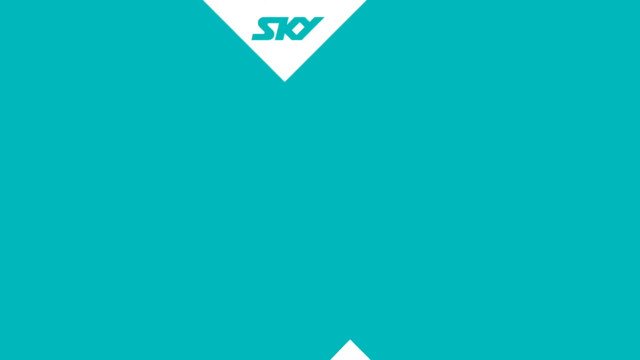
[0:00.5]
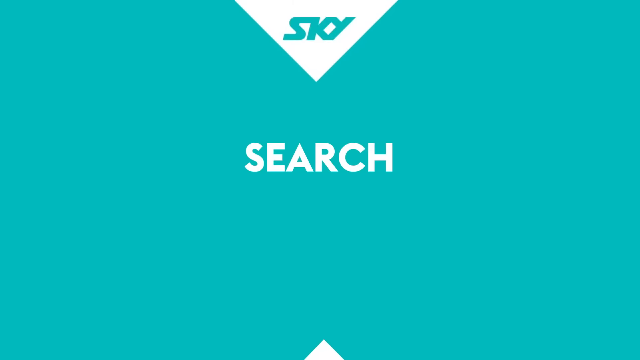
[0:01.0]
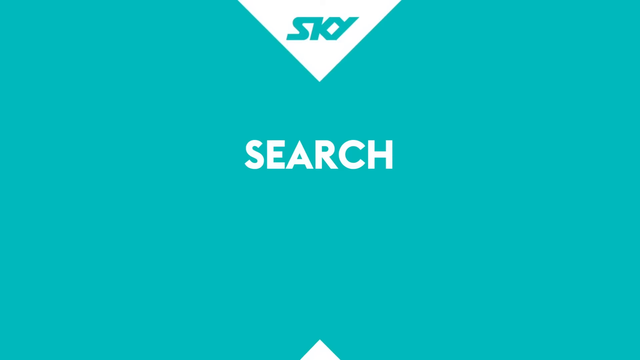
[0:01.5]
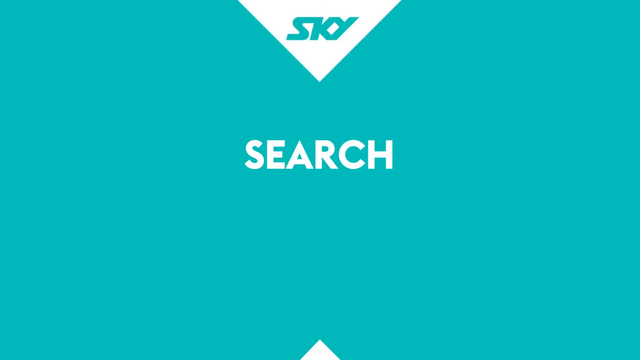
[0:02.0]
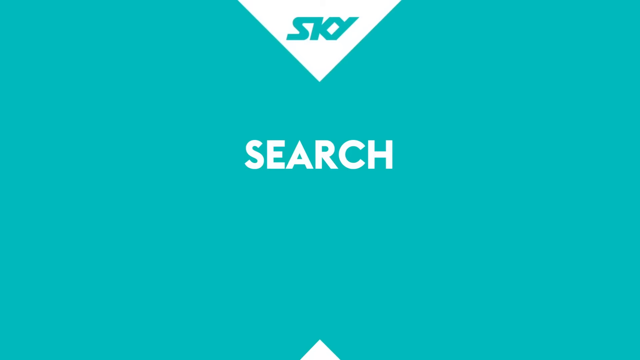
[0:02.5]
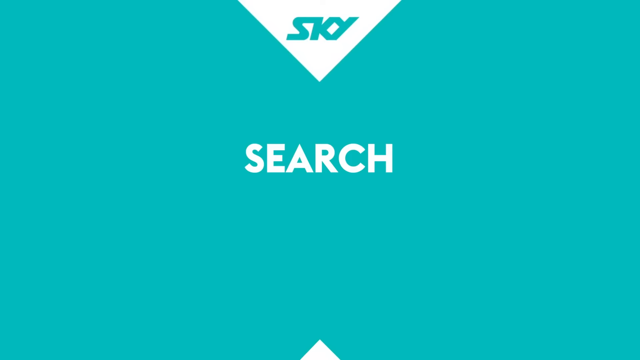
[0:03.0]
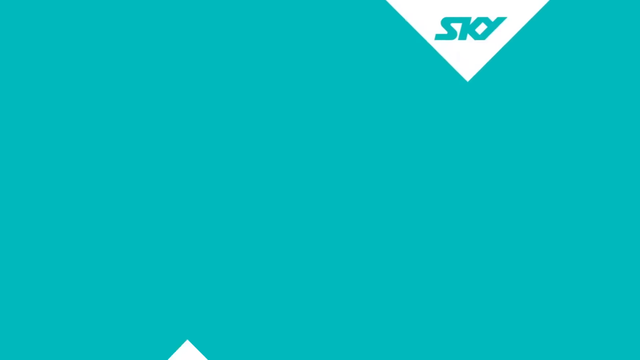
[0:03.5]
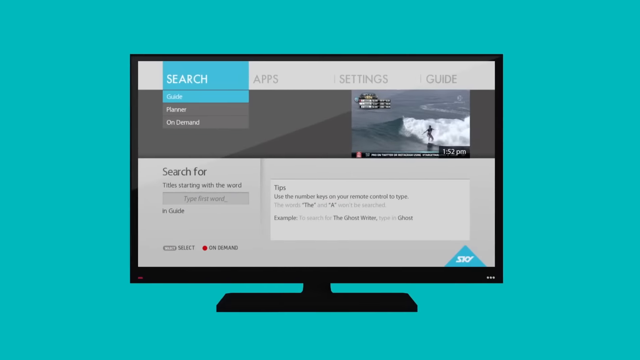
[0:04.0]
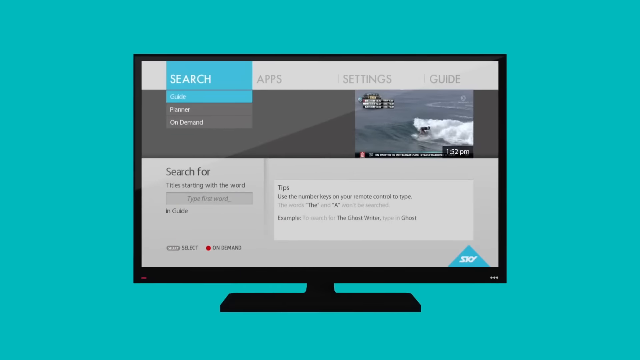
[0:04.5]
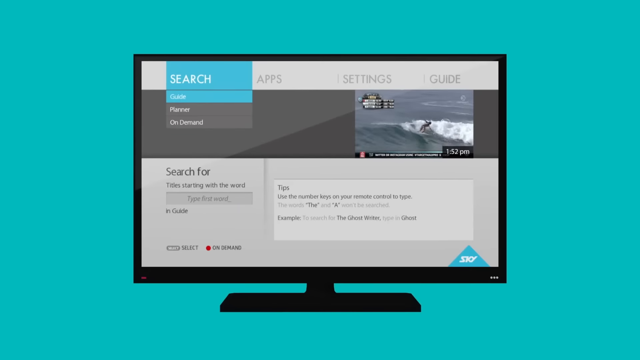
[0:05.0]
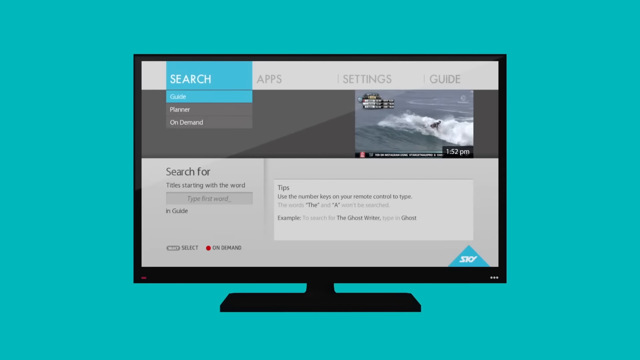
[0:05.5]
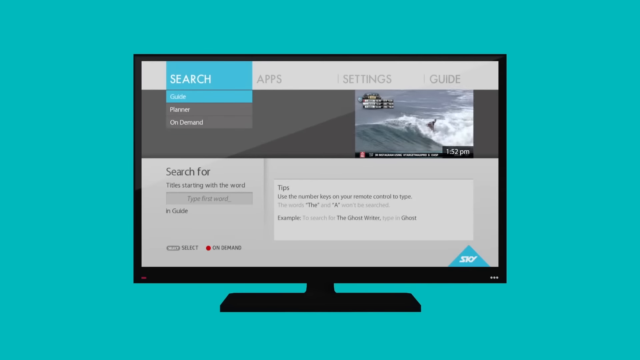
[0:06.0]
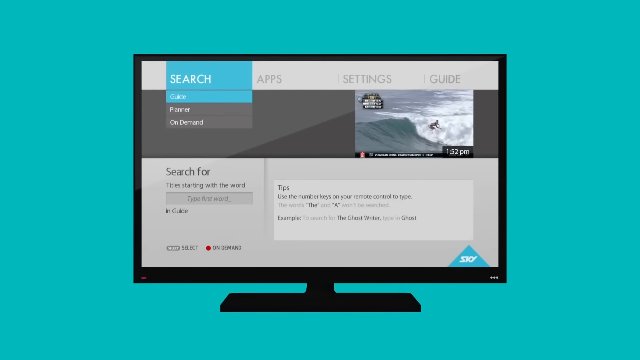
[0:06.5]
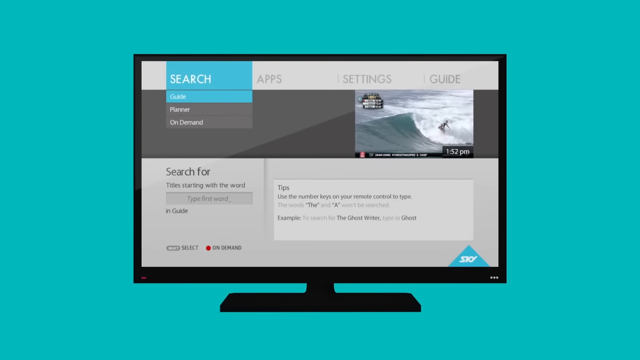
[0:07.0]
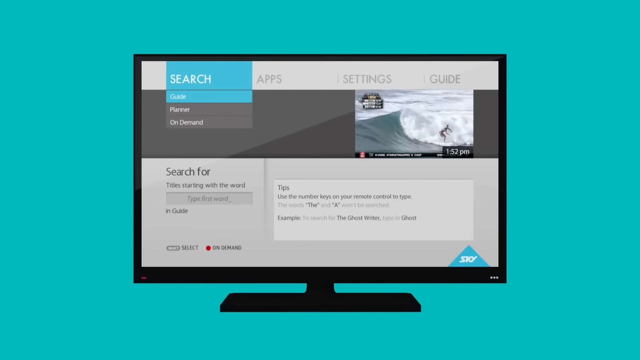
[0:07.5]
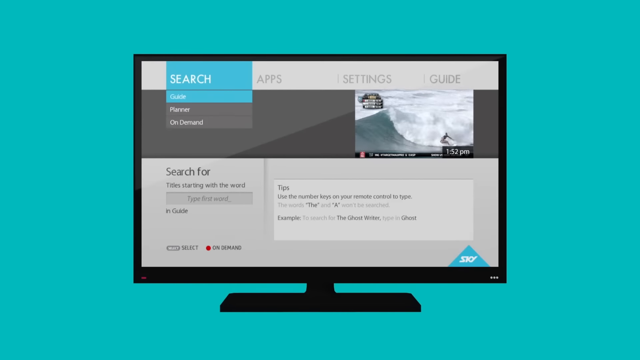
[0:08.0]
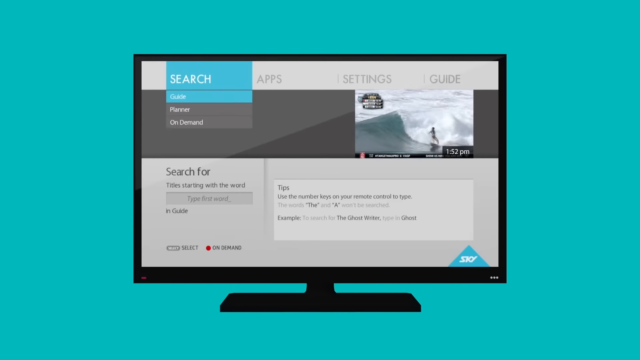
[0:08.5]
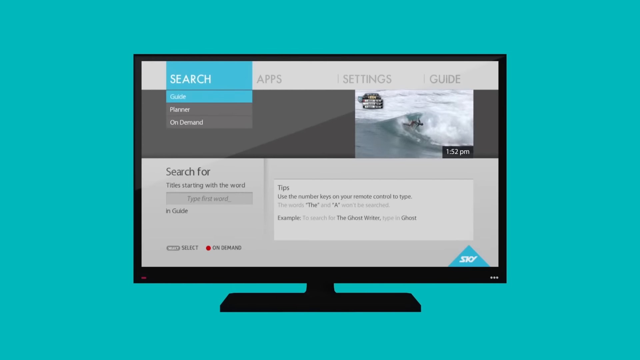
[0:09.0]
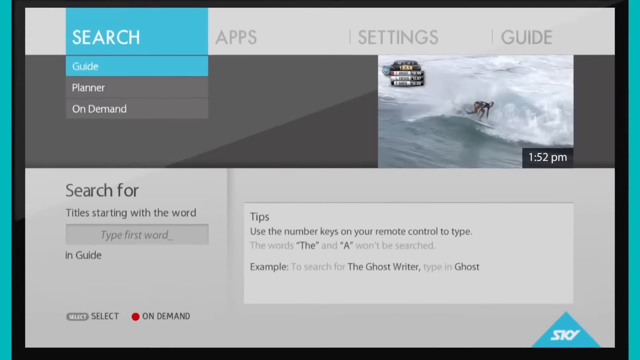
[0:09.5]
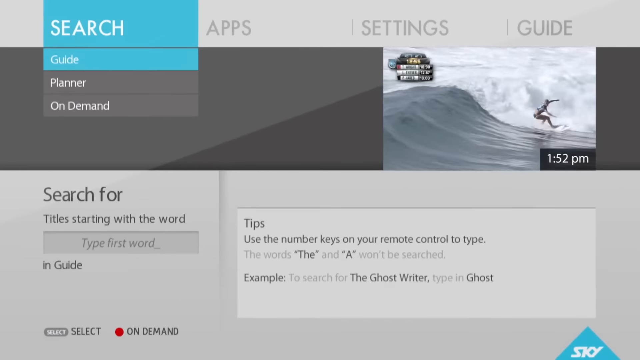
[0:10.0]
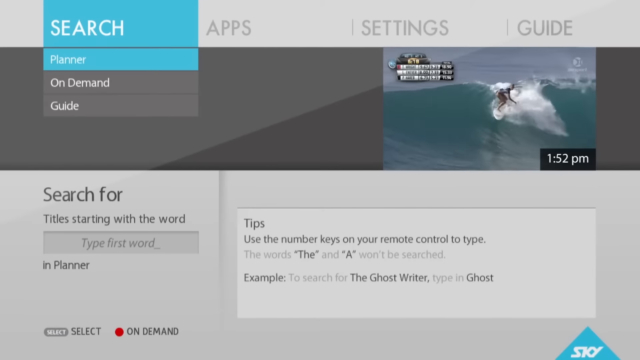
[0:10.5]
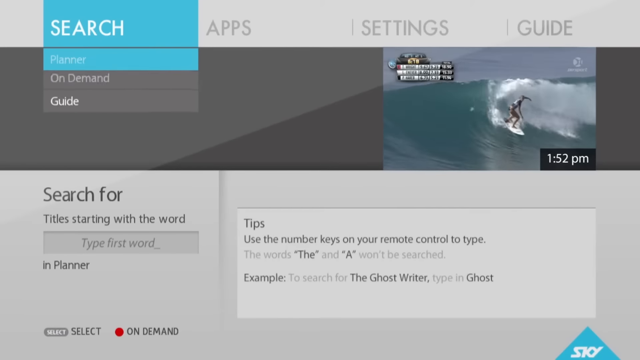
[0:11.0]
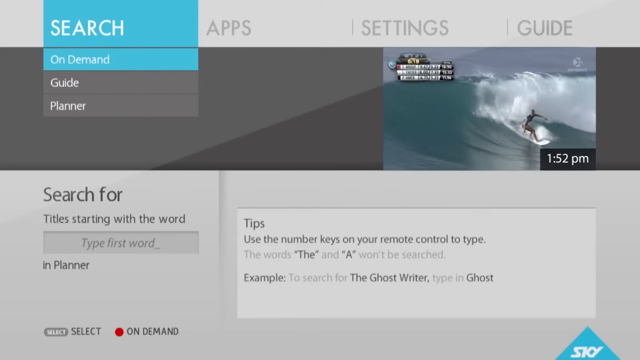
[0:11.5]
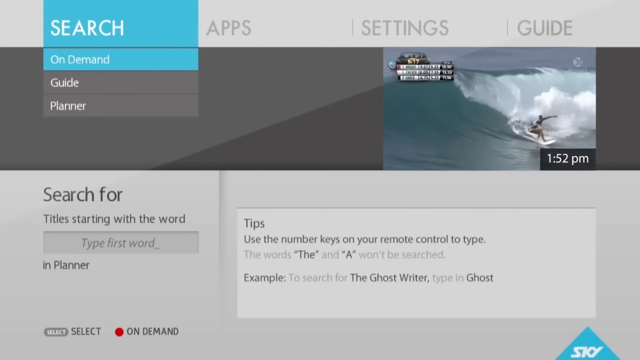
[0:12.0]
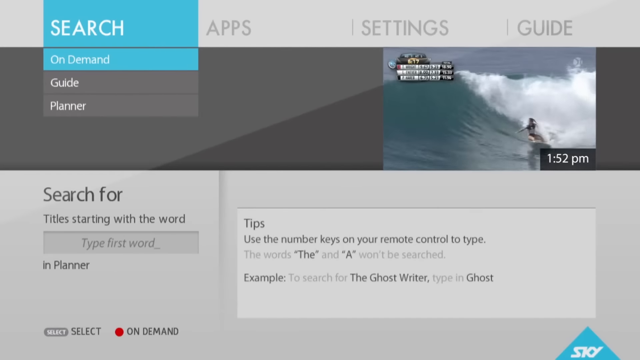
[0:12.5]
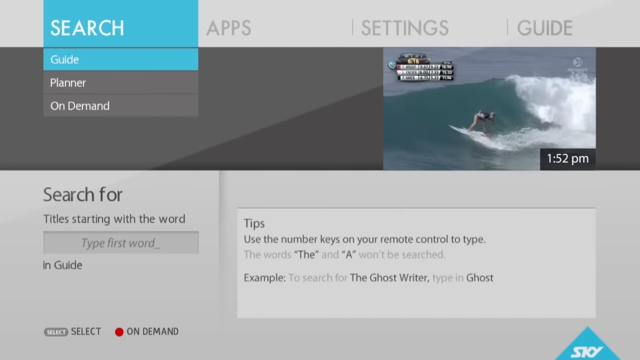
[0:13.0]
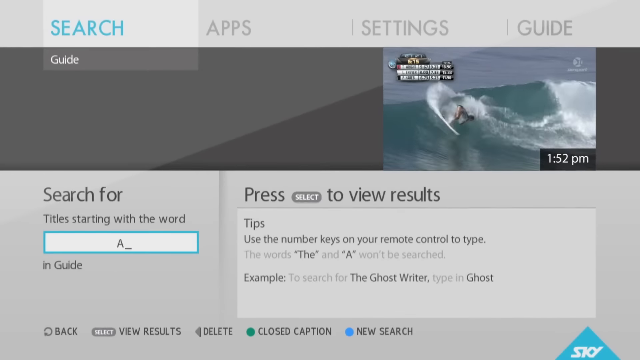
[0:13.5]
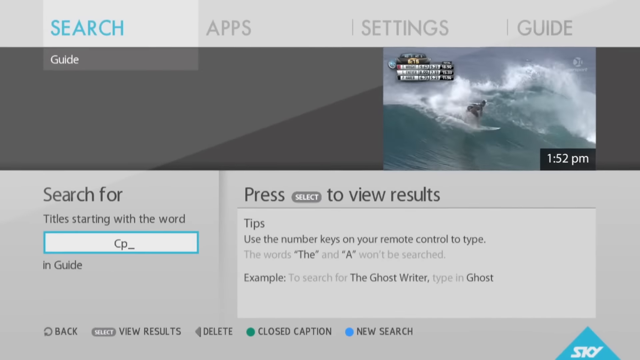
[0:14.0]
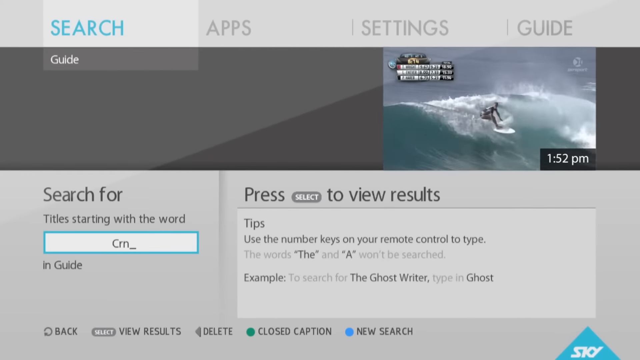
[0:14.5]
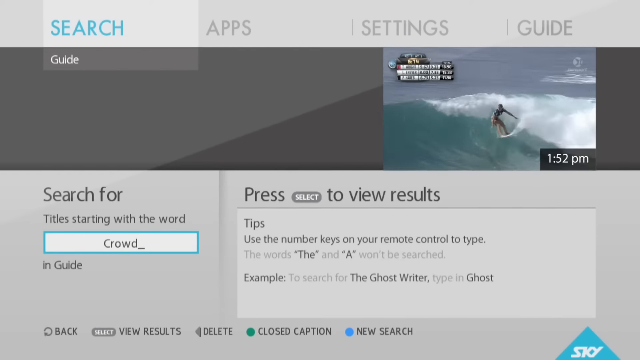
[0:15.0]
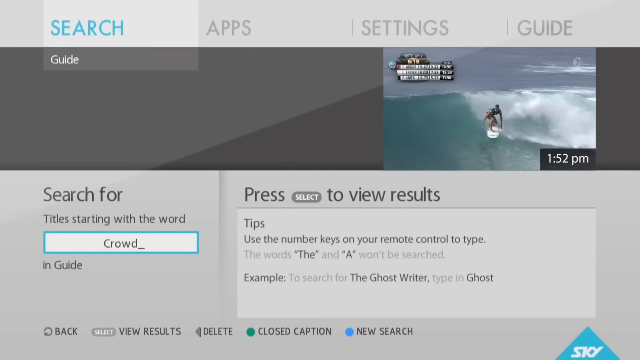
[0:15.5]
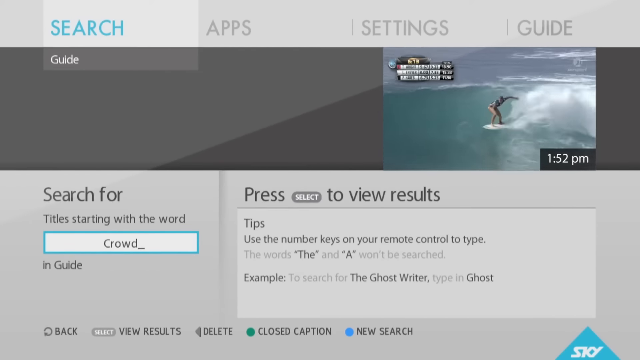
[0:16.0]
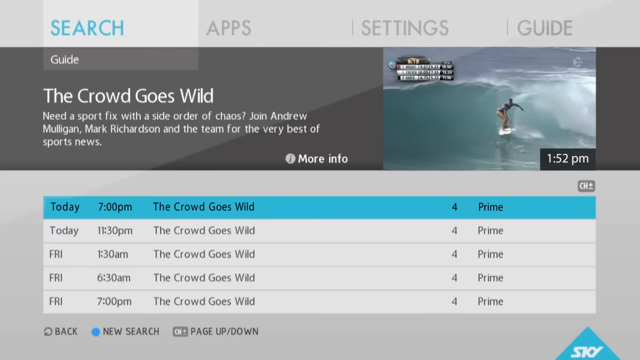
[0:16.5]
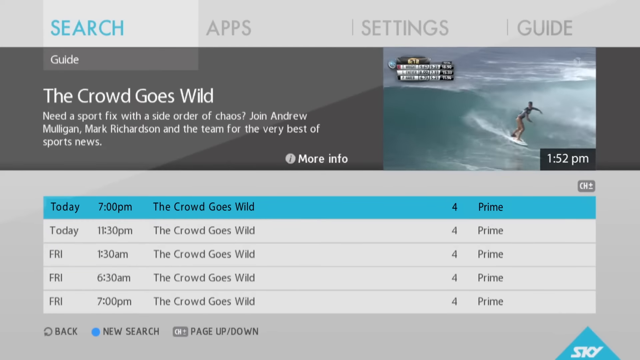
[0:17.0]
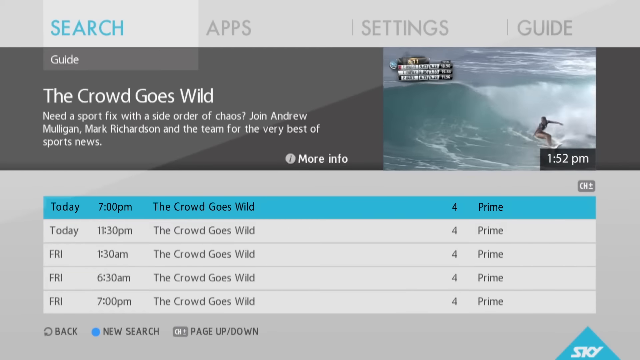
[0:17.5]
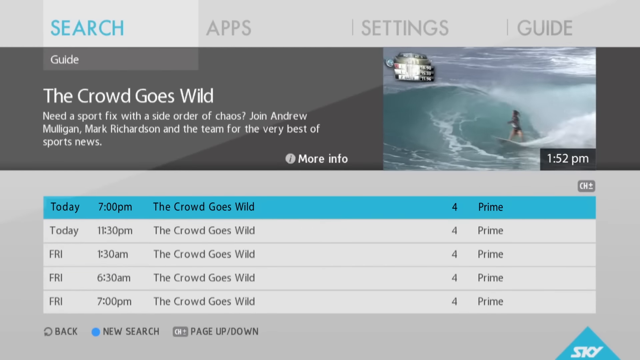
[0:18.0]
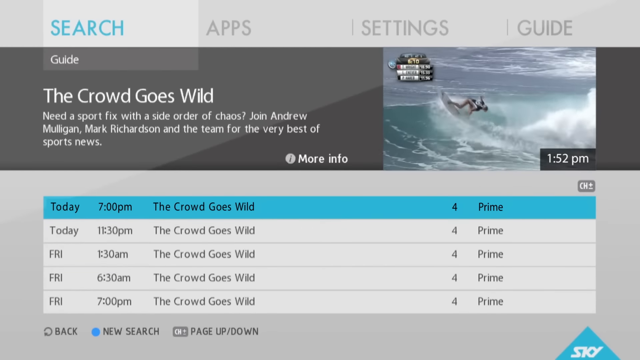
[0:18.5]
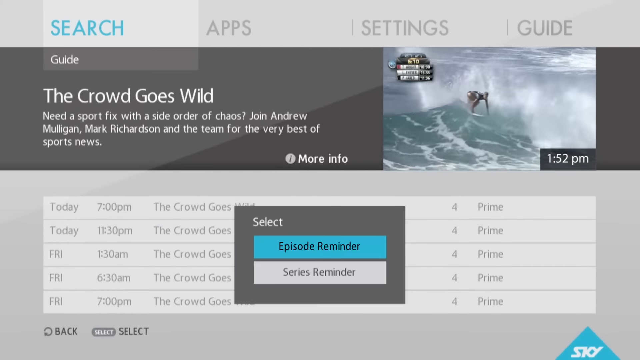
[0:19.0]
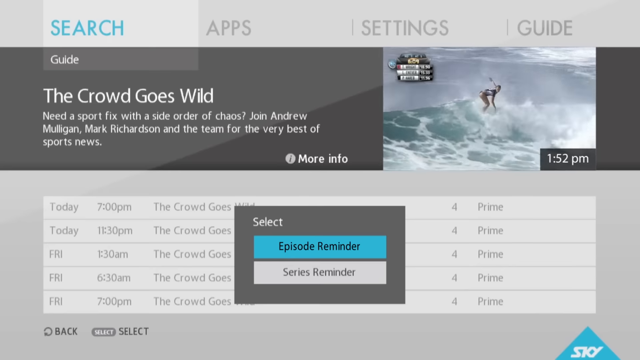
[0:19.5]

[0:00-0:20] The video begins with a screen that says "Sky" and "Search". The screen then shows an image of a computer with "Search", "Apps", "Settings" and "Guide" at the top. After clicking on the option to search for on-demand videos, the person searches for the word "Crowd". The bottom of the screen says "Press Select for results". A screen then pops up with options for The Crowd Goes Wild episodes. The top right portion of the screen shows a scene of a person surfing, with "1:52 p.m." Below, at the bottom, there is an episode guide showing for a reminder to be set to record these different options. The person searching for The Crowd Goes Wild has reminders set that say "Episode Reminder" and "Time Reminder", and on this screen searches for Episode Reminder in order to find certain episodes of The Crowd Goes Wild. The bottom of the screen says "Back", "New Search" and "Up and Down".